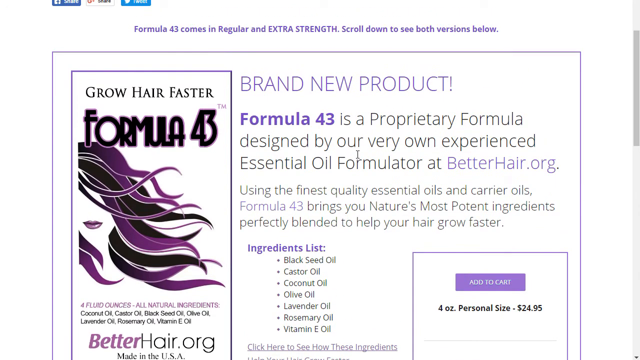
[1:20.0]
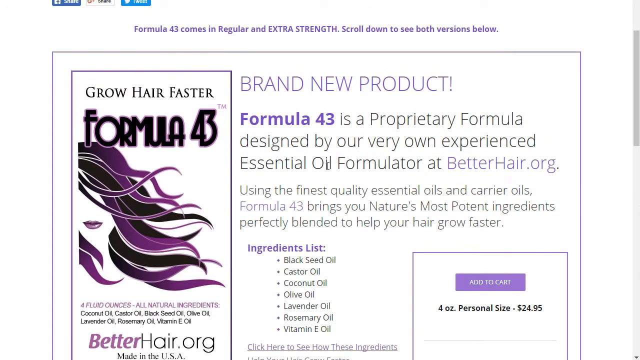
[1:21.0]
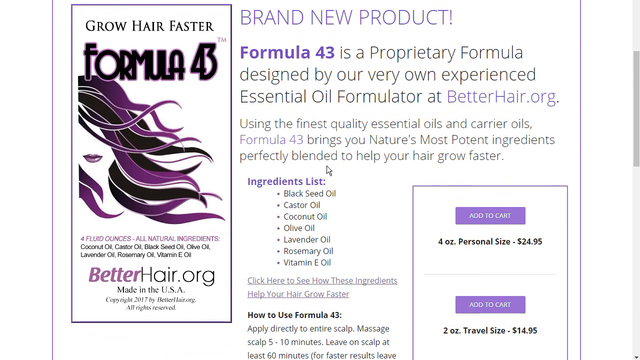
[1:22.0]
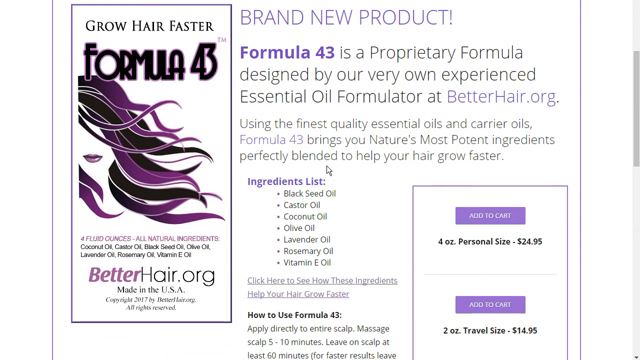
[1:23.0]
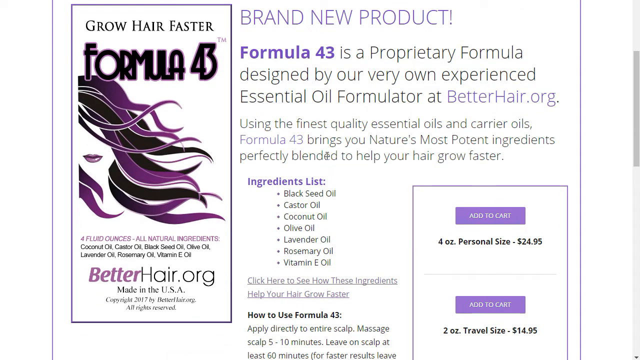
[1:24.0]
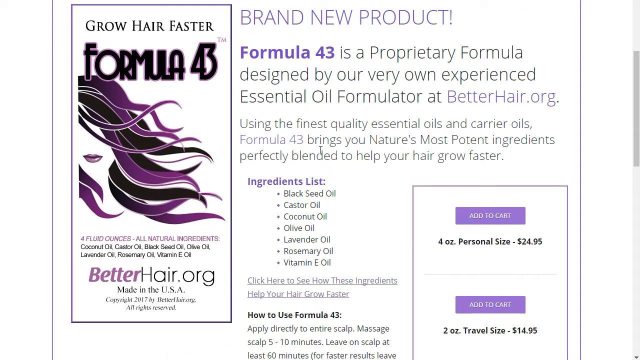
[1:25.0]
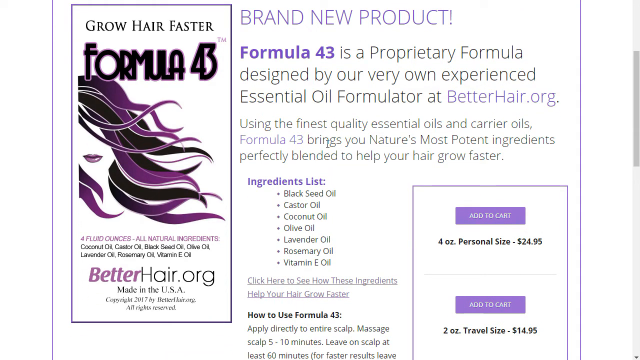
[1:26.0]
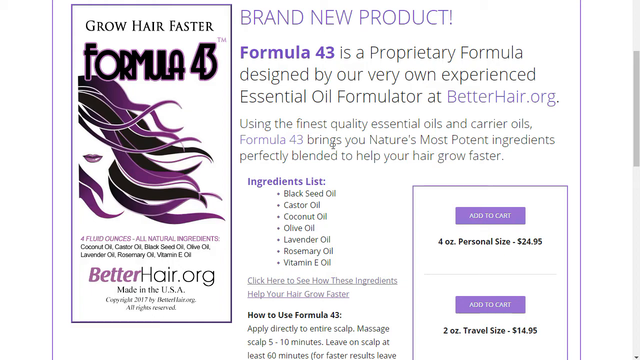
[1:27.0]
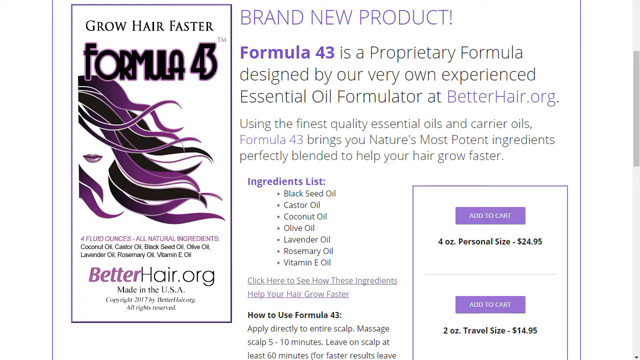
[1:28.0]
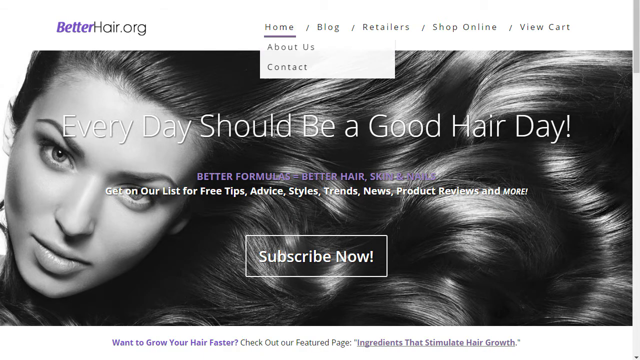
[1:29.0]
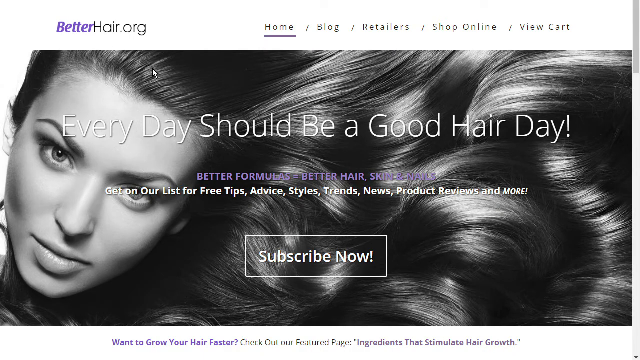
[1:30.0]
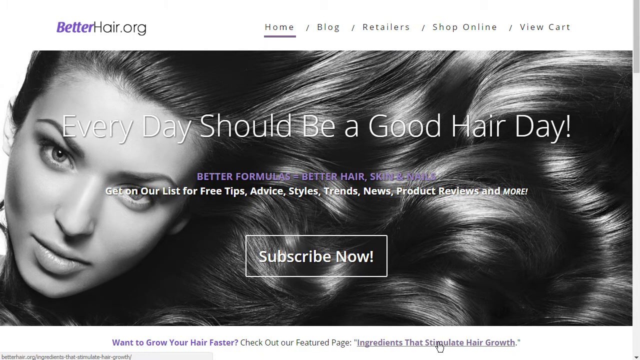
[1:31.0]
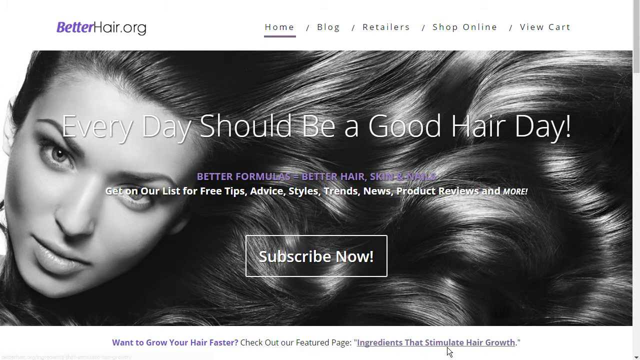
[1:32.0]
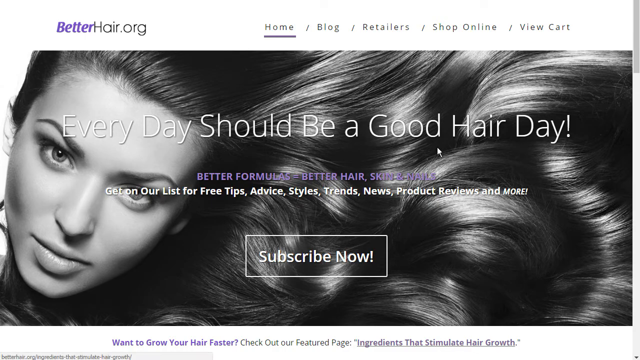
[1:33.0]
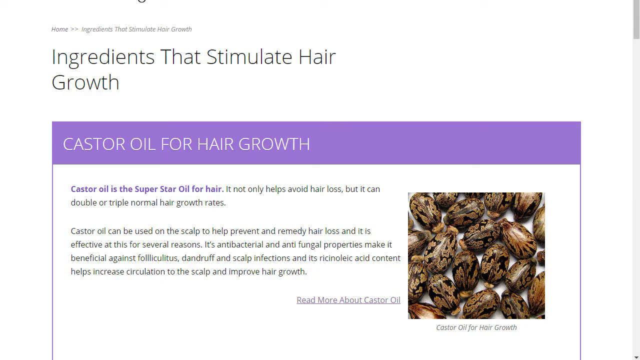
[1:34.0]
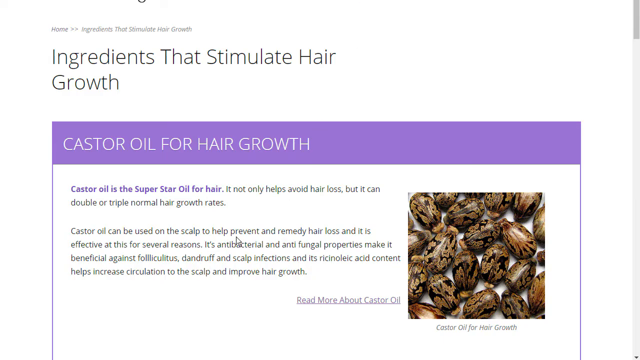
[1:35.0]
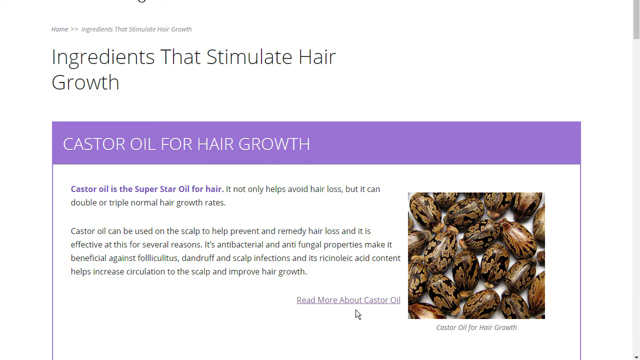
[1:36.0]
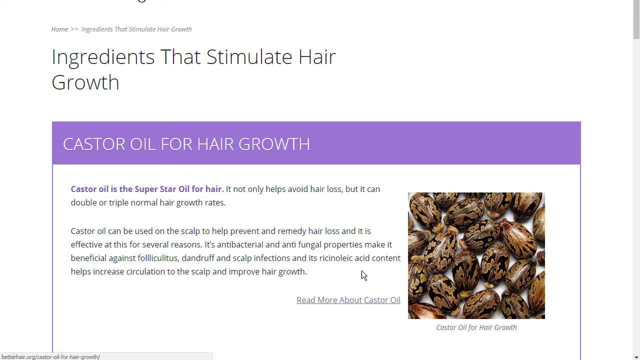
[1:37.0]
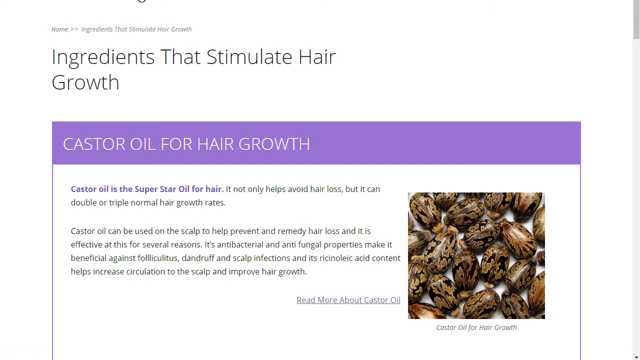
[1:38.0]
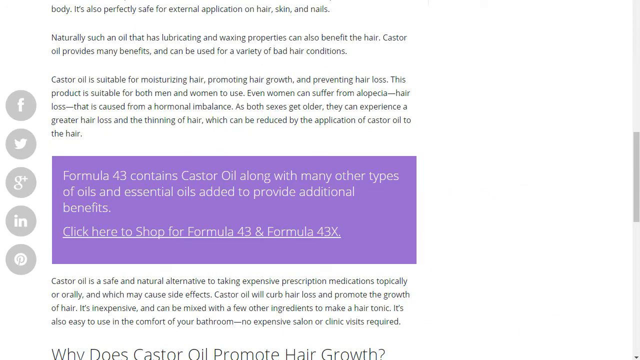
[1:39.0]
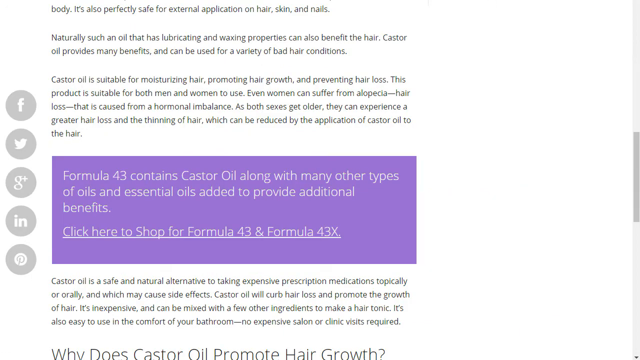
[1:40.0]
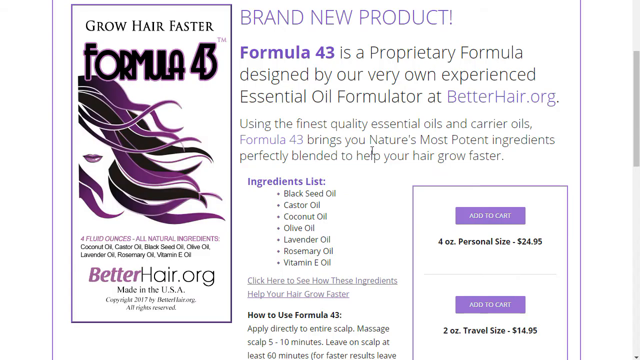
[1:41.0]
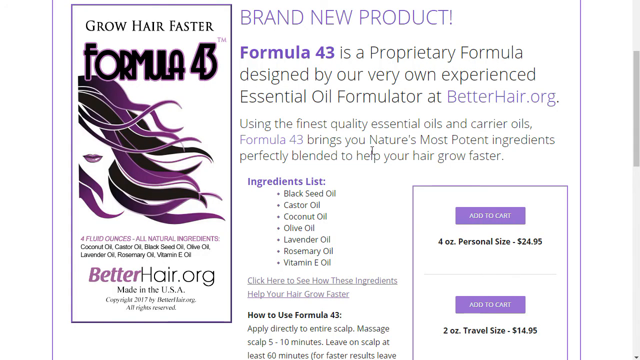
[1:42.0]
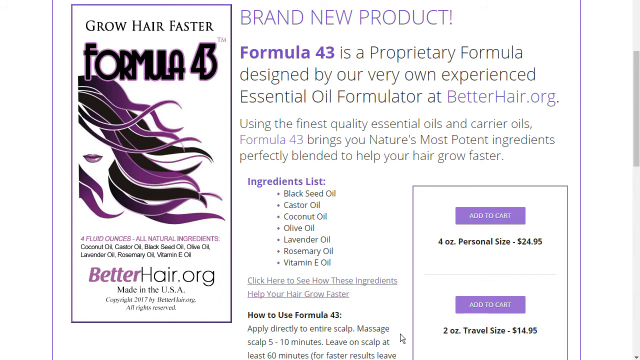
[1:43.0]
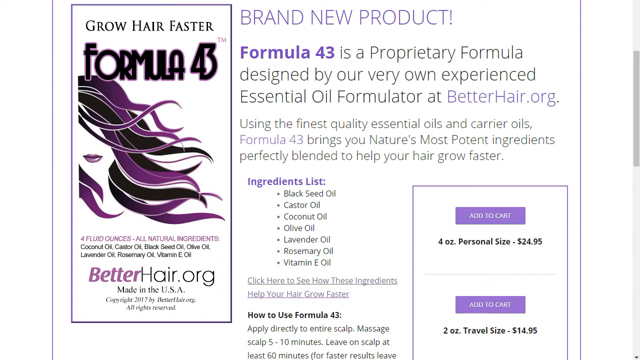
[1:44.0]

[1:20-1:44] The explanation of the product called Formula 43 is still shown, along with the cartoon image of a woman with black and purple hair. The cursor scrolls through the article and then goes back to the home page, where the image of the lady with the beautiful hair appears again. It clicks again on the link about growing hair faster, and the view switches back to the article that says "ingredients that stimulate hair growth." The cursor clicks on "read more about castor oil" and then on "read more about Formula 43." The view returns to the same cartoon figure that appears to be a lady with black and purple hair, alongside the explanation of what Formula 43 is.